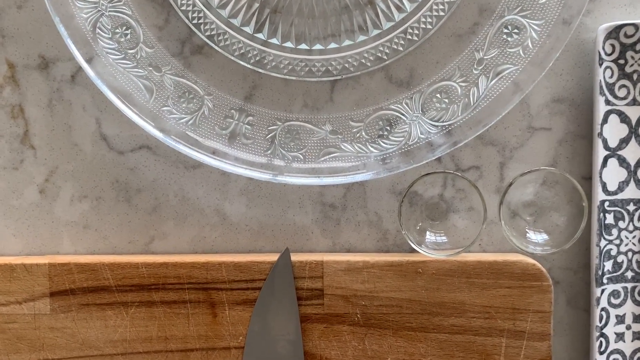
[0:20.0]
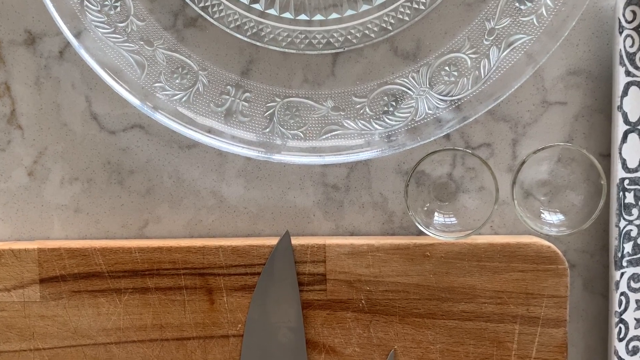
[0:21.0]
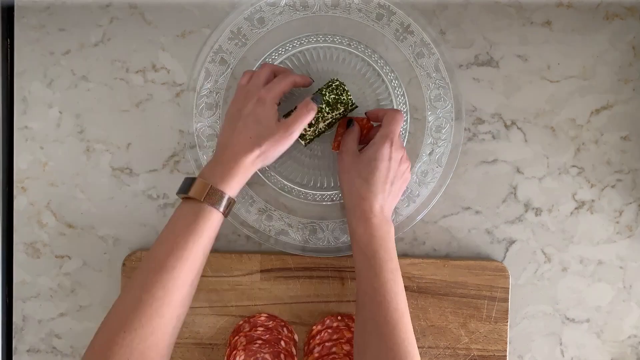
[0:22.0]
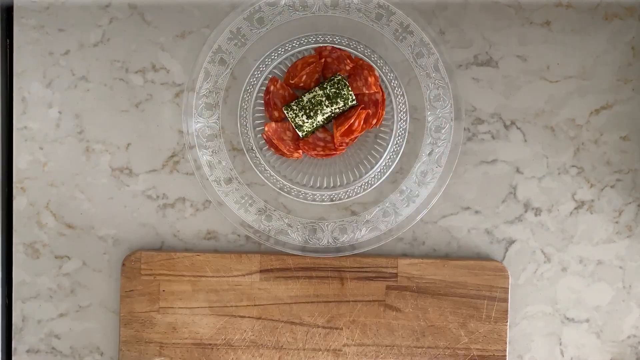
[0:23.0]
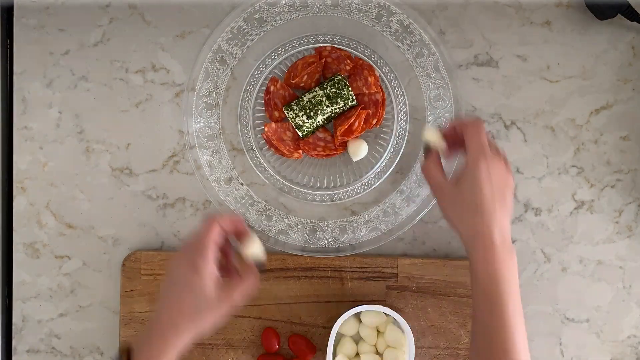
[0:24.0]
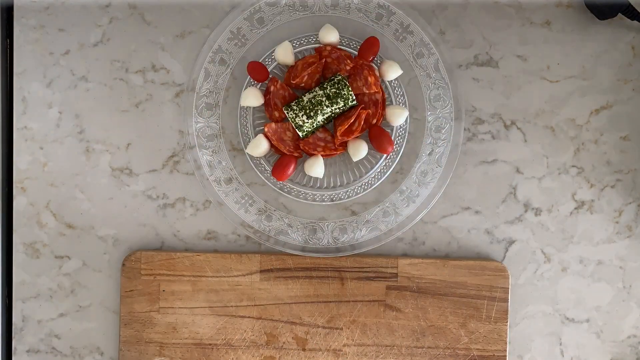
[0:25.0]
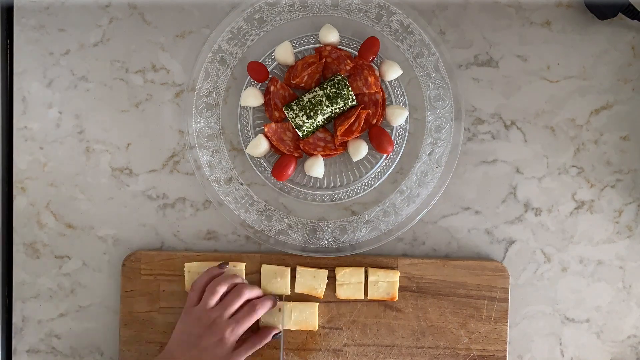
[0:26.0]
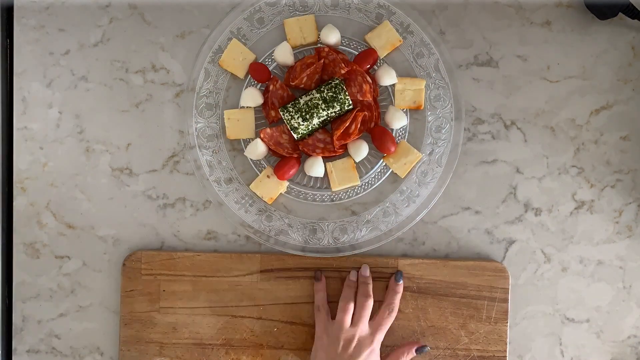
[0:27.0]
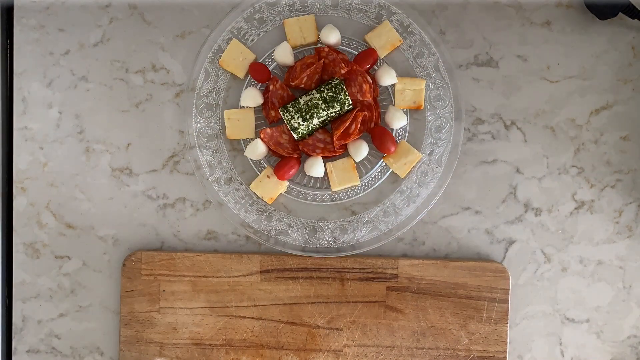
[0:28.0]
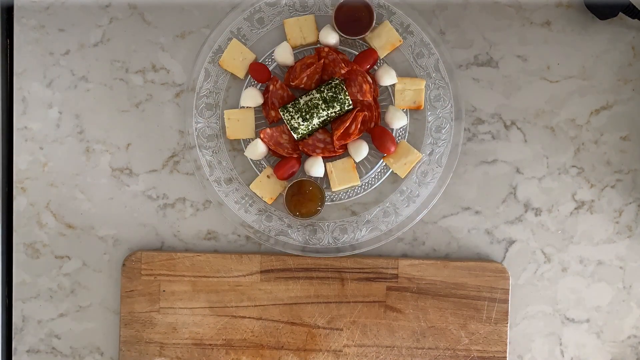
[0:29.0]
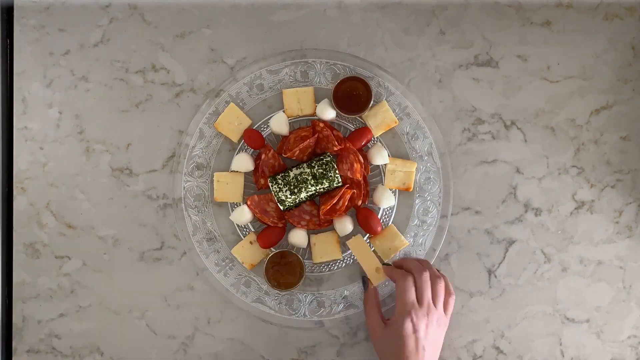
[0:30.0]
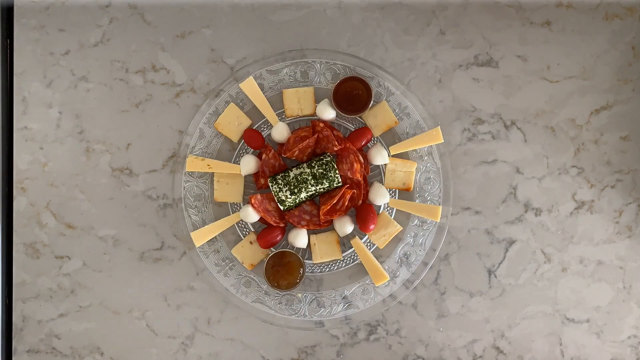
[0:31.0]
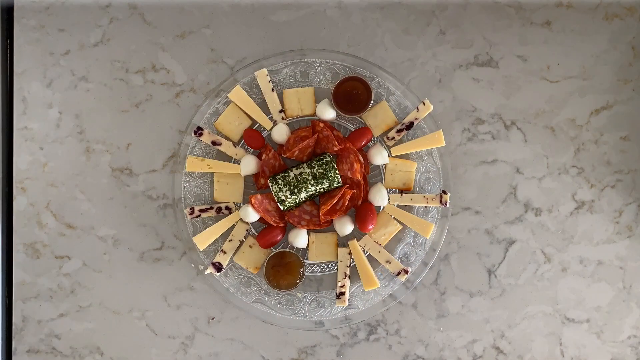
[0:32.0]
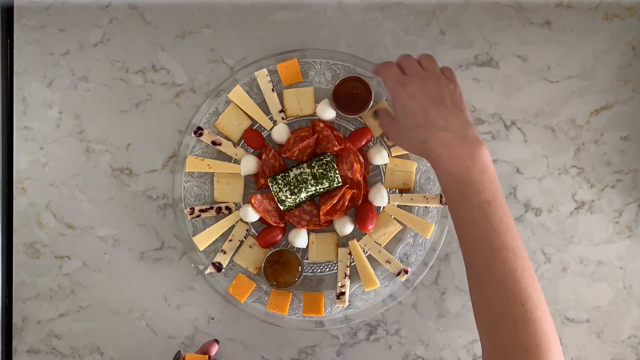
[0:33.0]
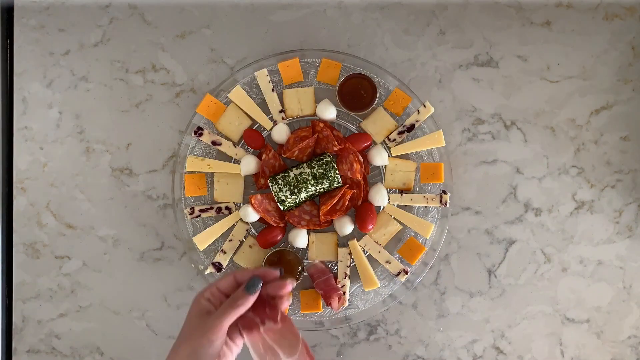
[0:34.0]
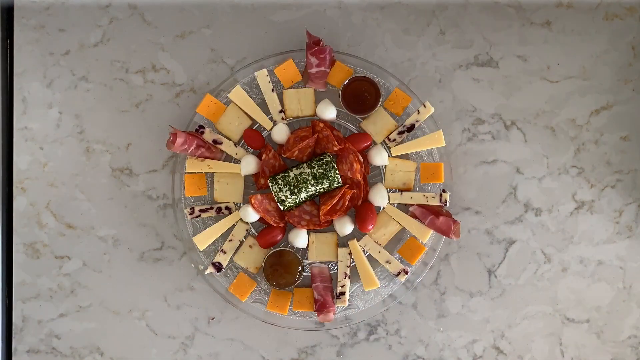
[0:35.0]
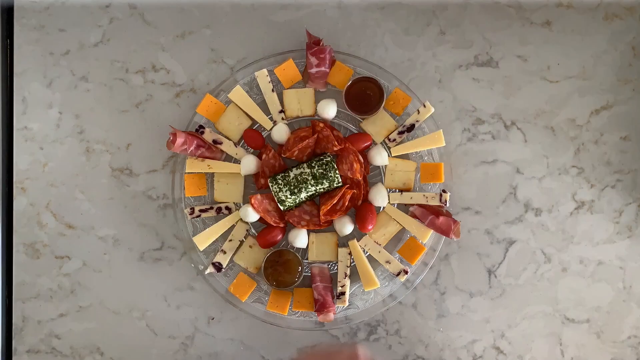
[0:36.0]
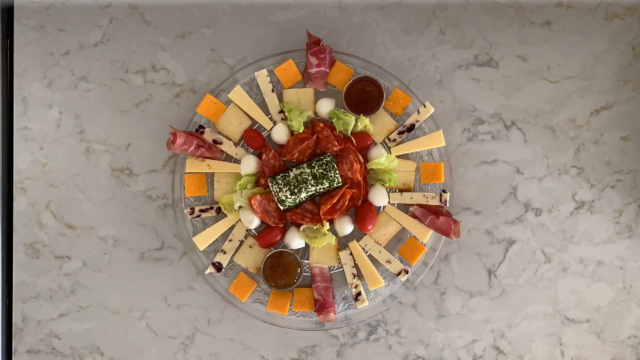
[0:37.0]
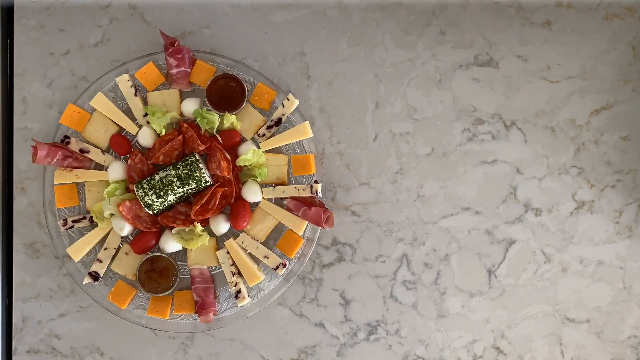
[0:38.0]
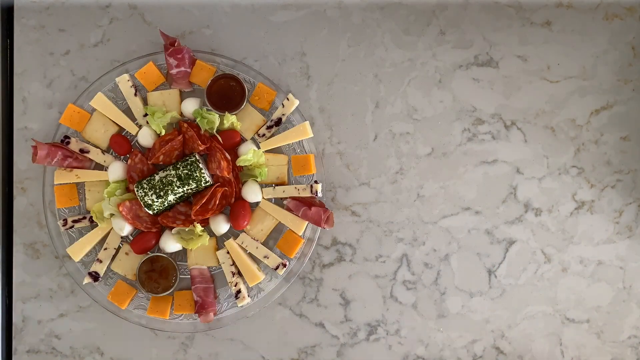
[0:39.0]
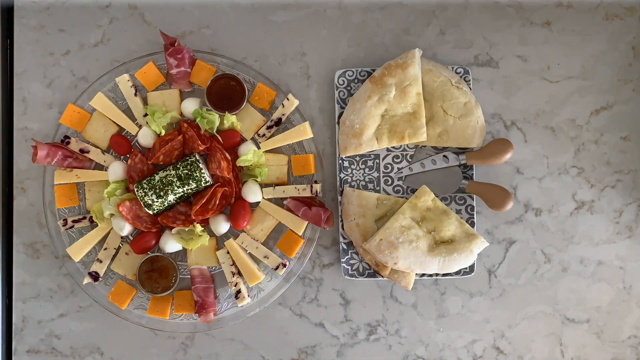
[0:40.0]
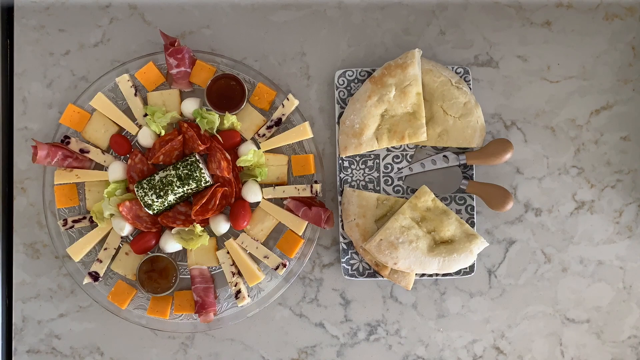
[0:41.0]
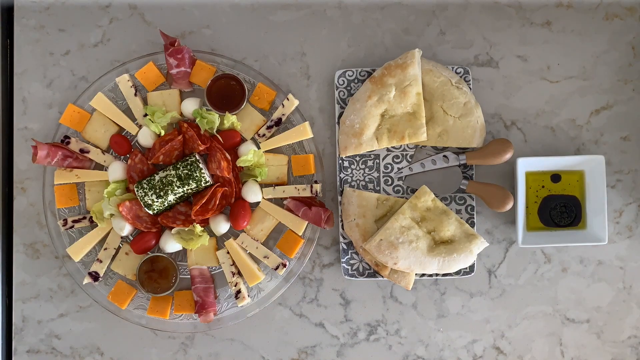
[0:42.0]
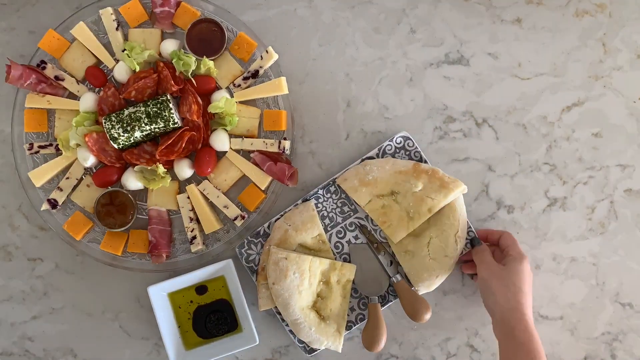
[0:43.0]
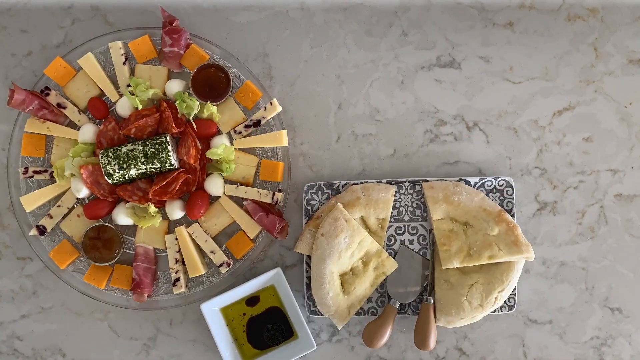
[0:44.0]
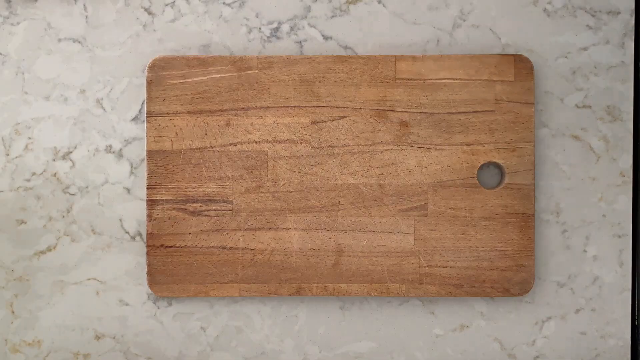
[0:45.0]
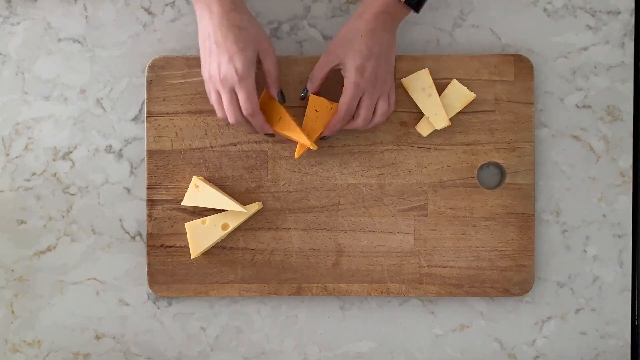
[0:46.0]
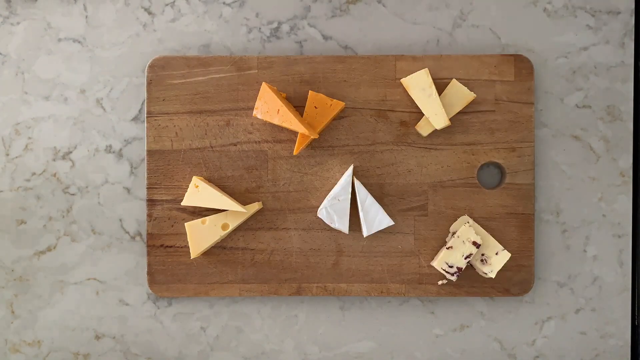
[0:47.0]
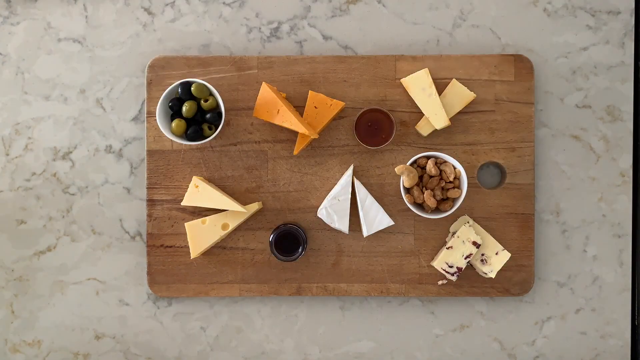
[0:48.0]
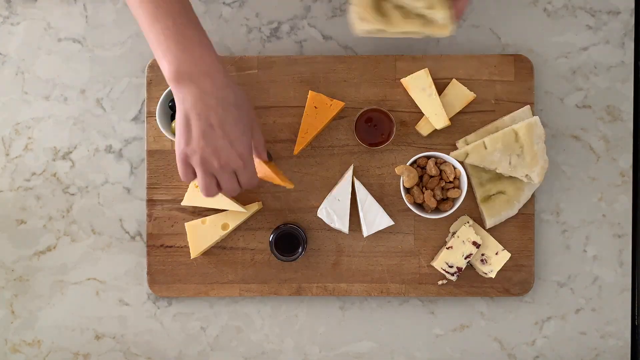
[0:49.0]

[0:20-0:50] The video zooms in, revealing two small shot glasses or small glasses between the brown cutting board and the large clear bowl. It then cuts to someone putting food into the large clear bowl, with only their hands shown. The items placed in the bowl include what look like cheeses and thinly sliced deli meat, along with maybe crackers or something similar. The person arranges the cheese, tomatoes and vegetables, deli meat and crackers in a fancy pattern inside the bowl. Next, the person places two small dipping sauces inside the bowl along with additional cheeses. Once the bowl is complete, the person pulls the decorated blue and white plate into view.